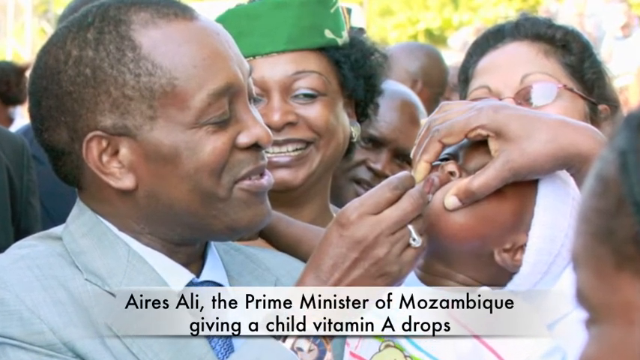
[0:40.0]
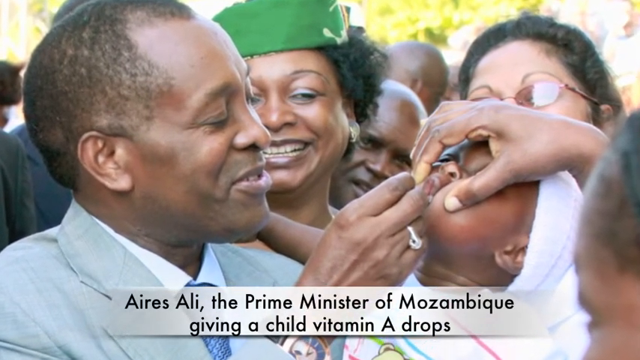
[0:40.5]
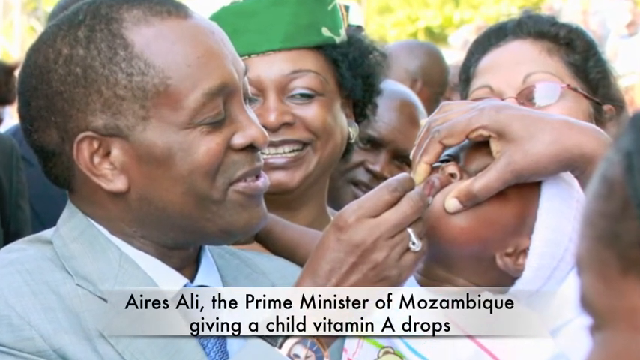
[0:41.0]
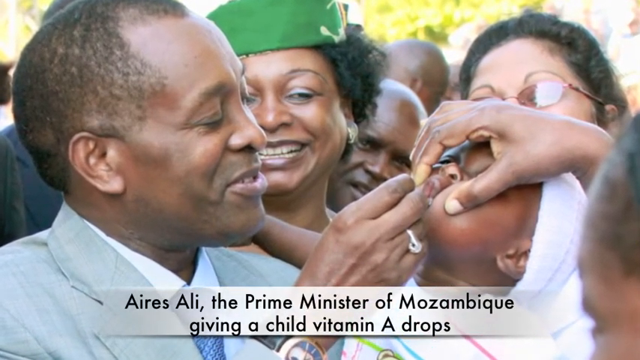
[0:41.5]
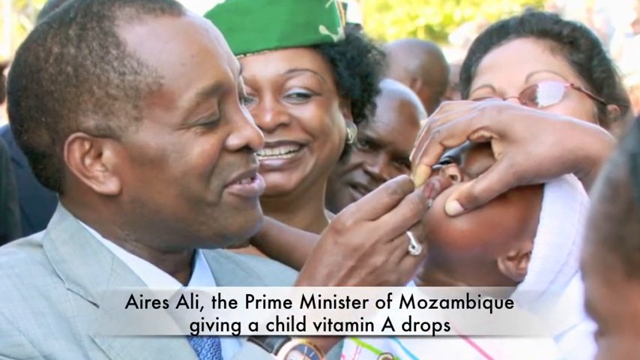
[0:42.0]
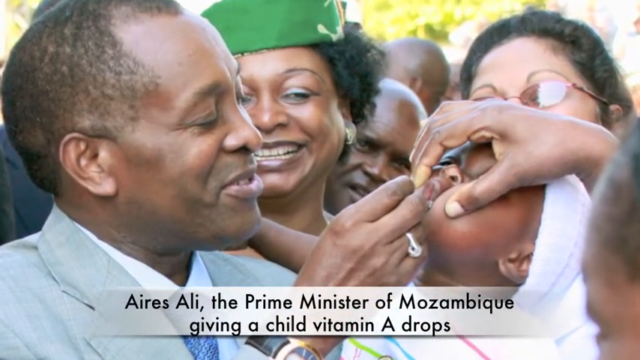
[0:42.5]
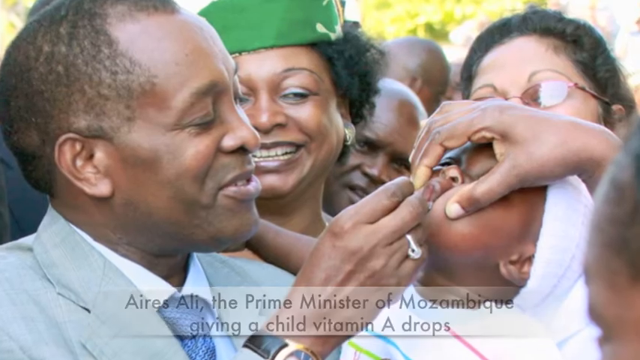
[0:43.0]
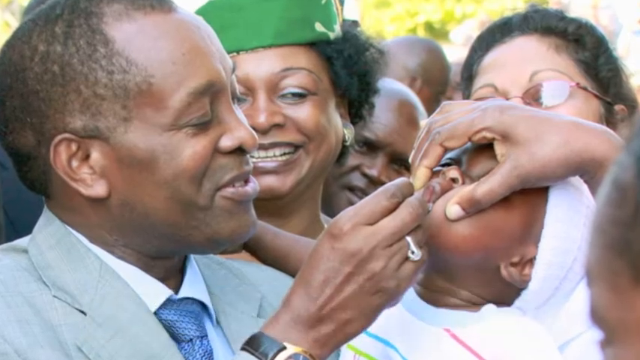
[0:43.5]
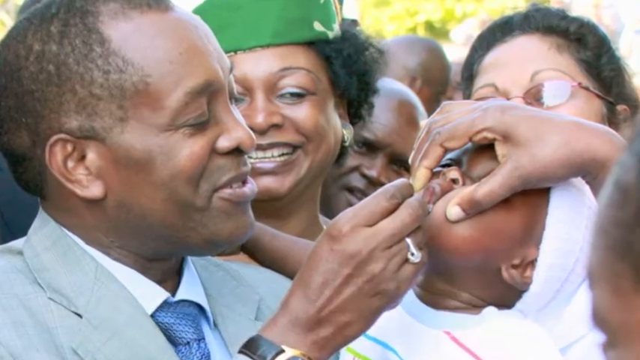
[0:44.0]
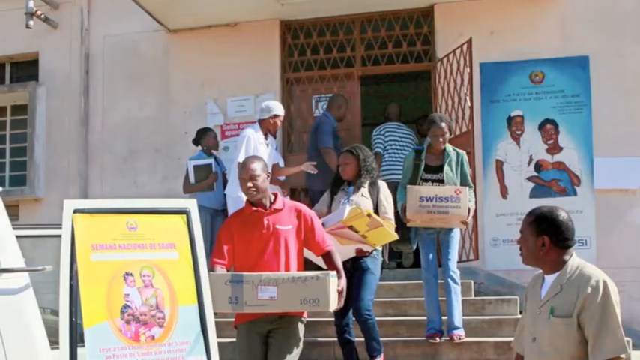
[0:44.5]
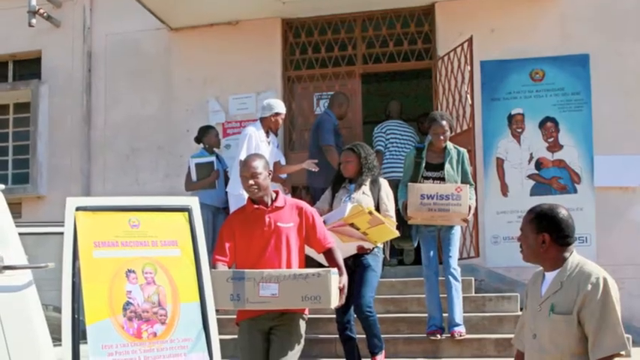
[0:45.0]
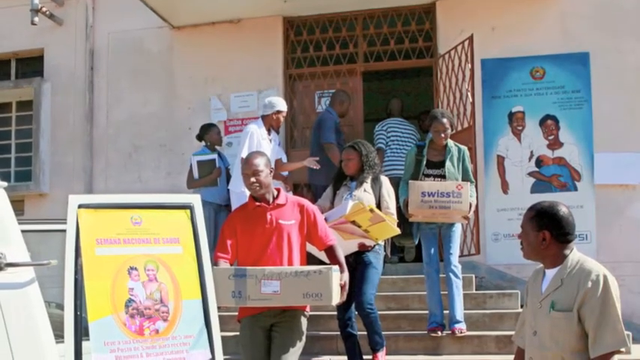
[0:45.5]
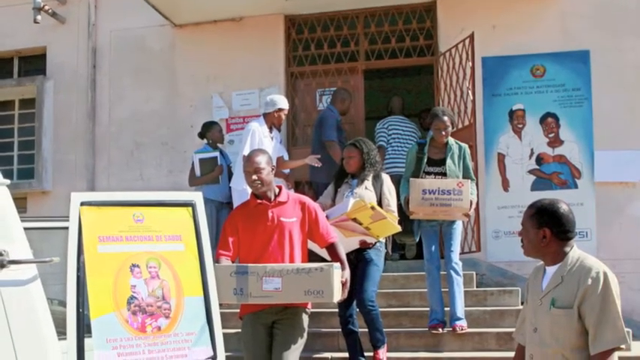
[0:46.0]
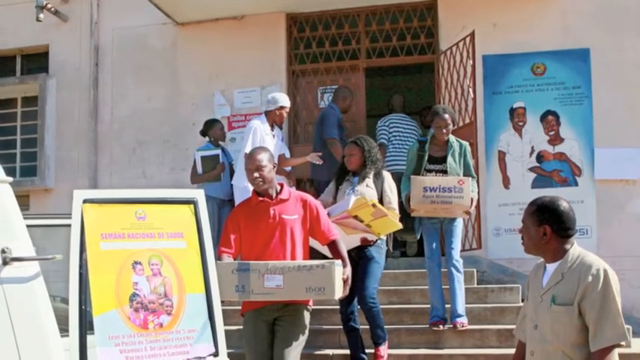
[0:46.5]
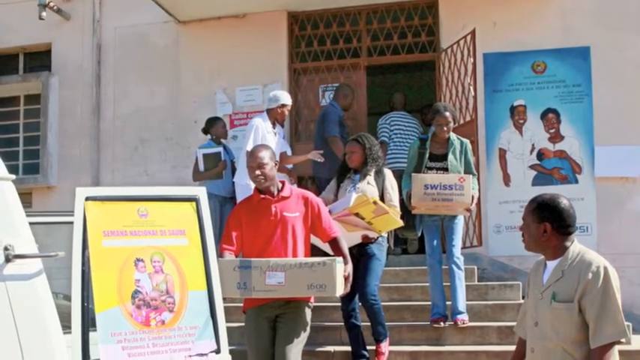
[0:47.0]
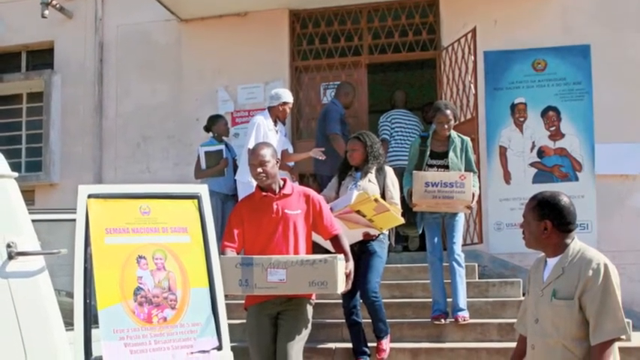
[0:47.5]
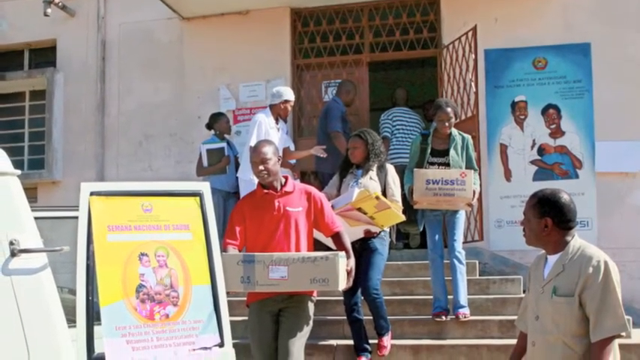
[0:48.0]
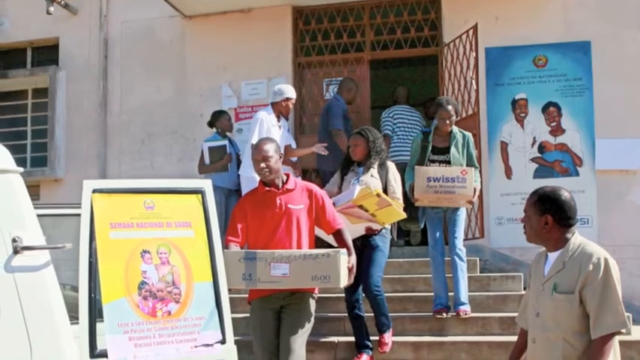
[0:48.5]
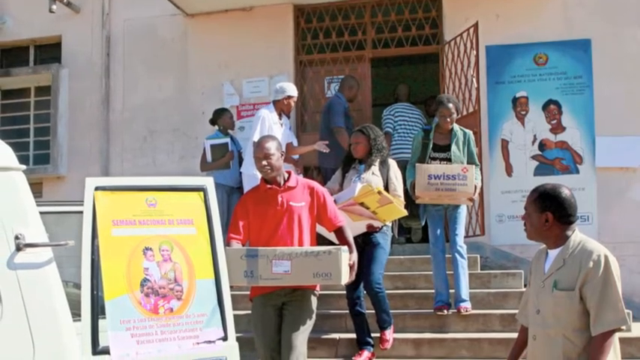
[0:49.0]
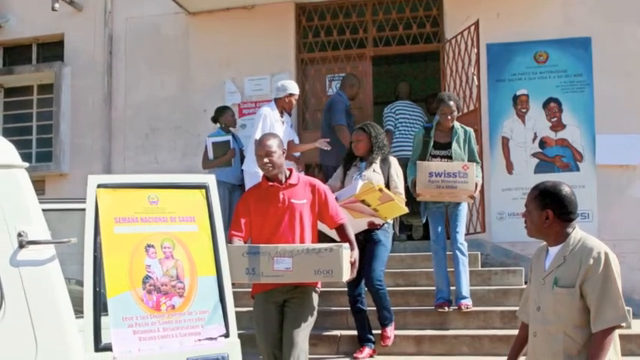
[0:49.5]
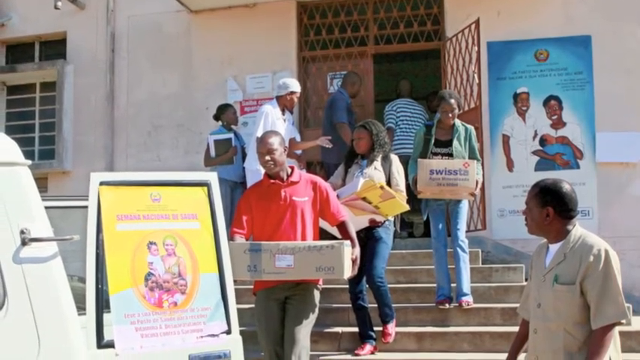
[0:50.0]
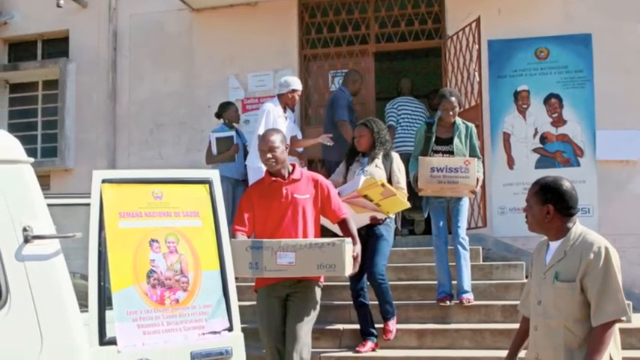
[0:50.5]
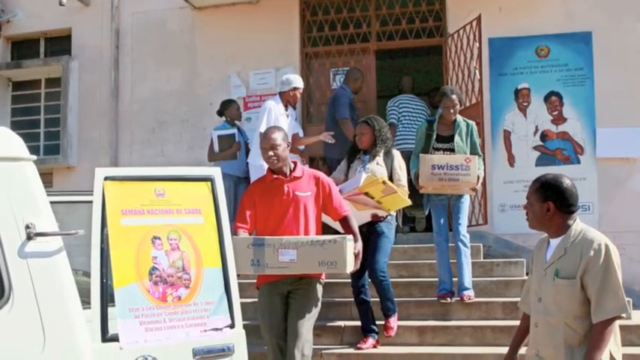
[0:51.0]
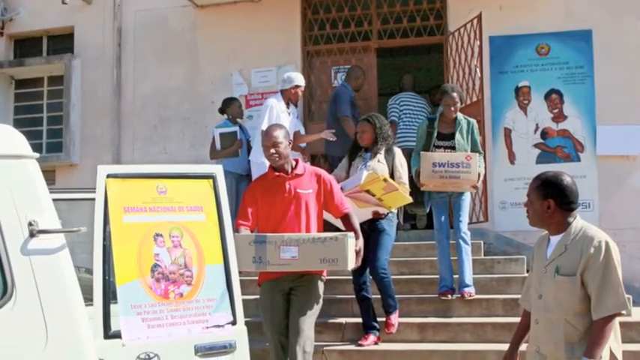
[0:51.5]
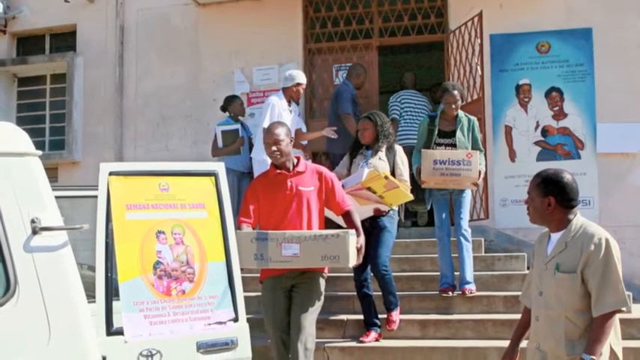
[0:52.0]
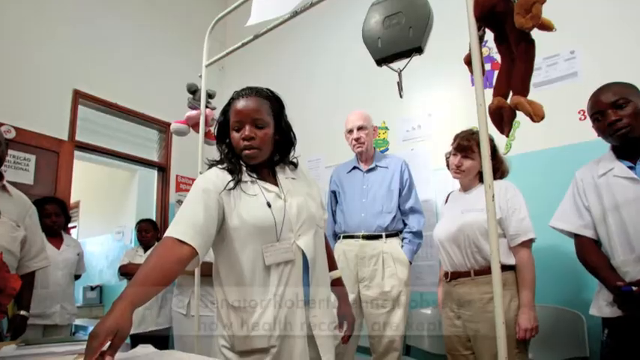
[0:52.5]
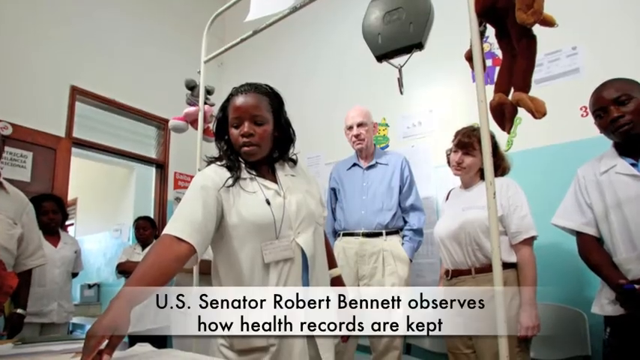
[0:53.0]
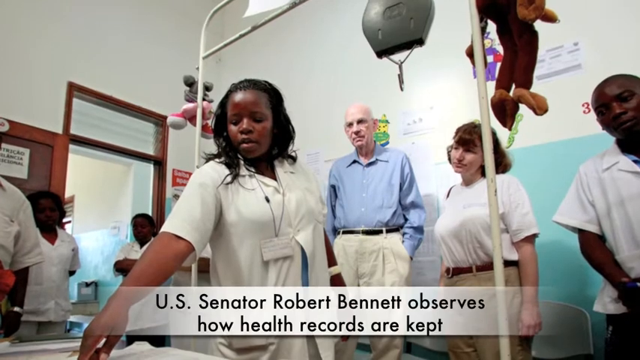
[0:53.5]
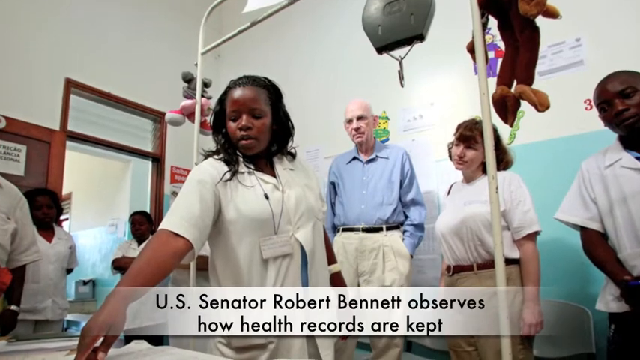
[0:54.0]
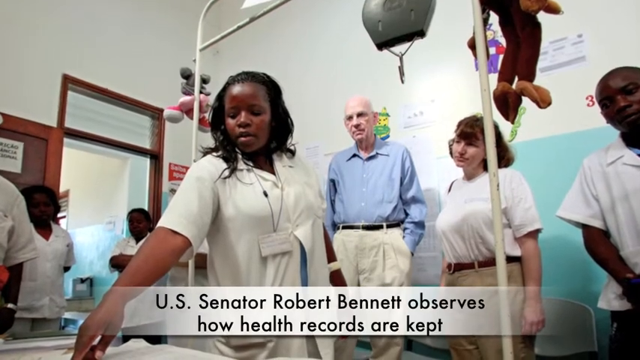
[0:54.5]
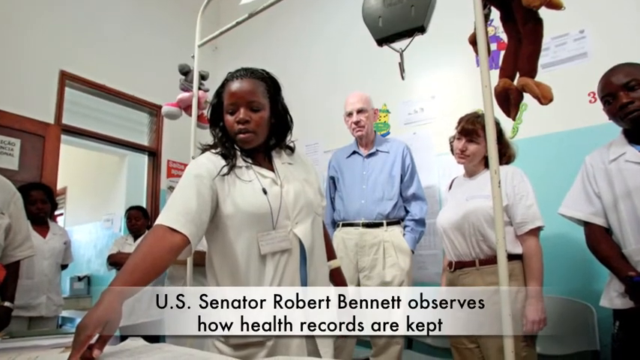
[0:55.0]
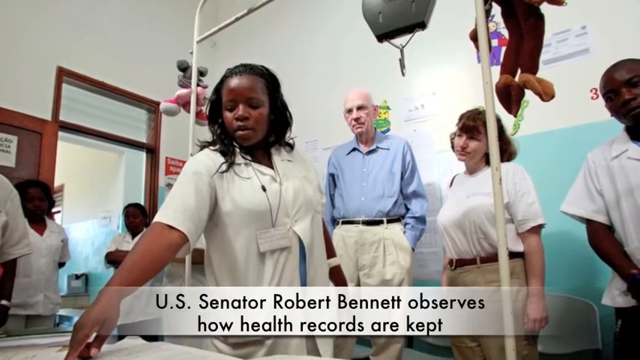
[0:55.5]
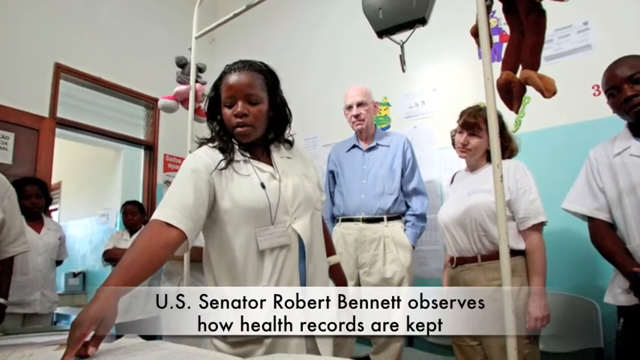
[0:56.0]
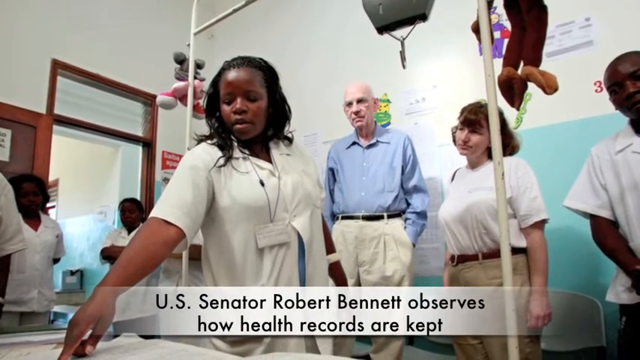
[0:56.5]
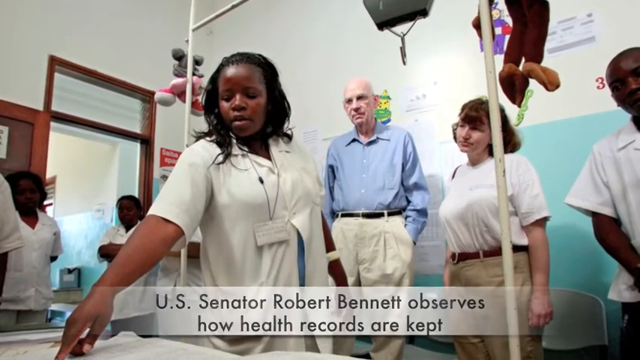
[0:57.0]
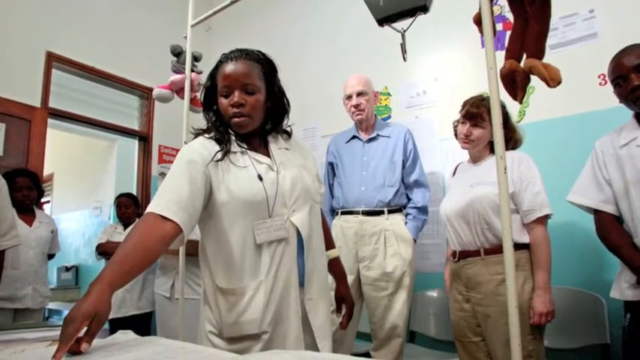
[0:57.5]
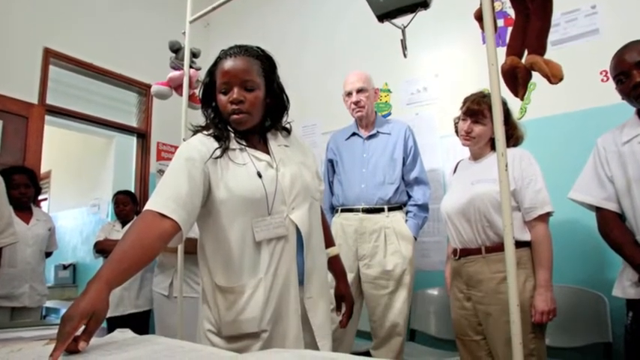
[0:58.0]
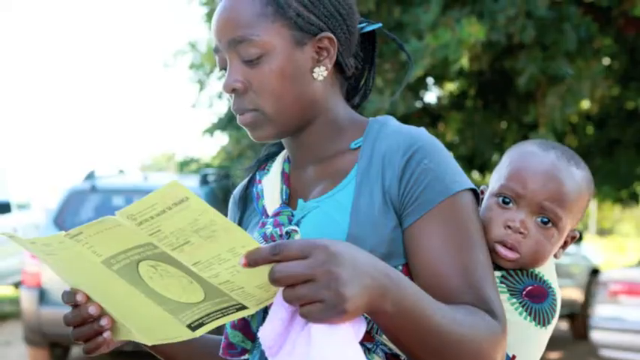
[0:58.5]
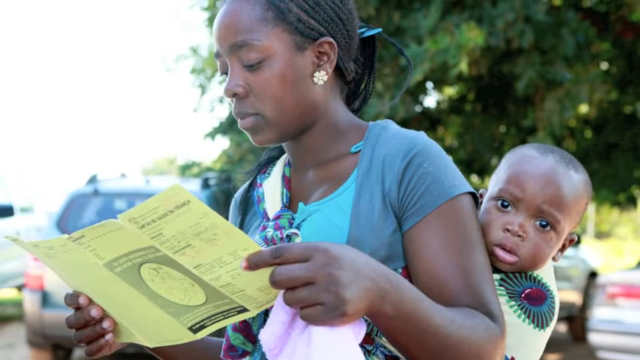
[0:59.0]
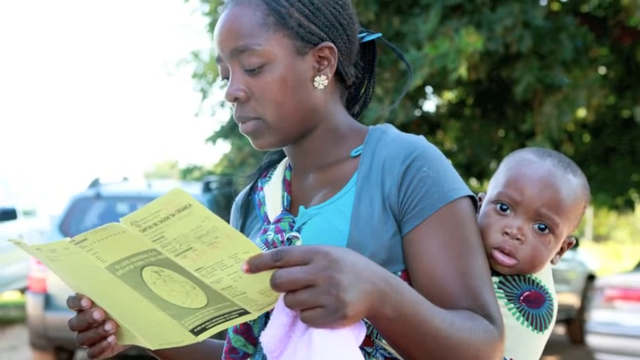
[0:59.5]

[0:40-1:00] A series of still images continues; some have descriptions in a translucent white text box along the bottom, and others do not. The first image shows a man in a suit holding a small child around one to two years old. He has his right hand up toward the child's mouth, holding on to something, while an adult hand comes over the top of the child's head, holding the side of the mouth and trying to open it. Around him are crowds of smiling people, some standing on tiptoe or looking around others to get a good view. The caption reads "Aries Alley, the Prime Minister of Mozambique, giving a child vitamin A drops." The camera very slowly zooms in on this image. The next image shows people in a line walking down a set of stairs with boxes in their hands, coming out of a wooden door; the camera slowly zooms out. The next image shows people inside a building. In the foreground, someone in a white shirt is pointing to a piece of paper on a table. In the background, a man in slacks and a button-up shirt, with his hands in his pocket, looks at what is being pointed at, and a woman beside him to the right is also looking. The caption reads "U.S. Senator Robert Bennett observes how health records are kept." The camera slowly zooms in toward the man in the button-up shirt.